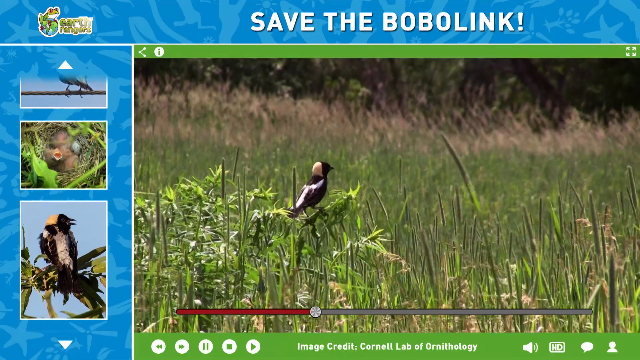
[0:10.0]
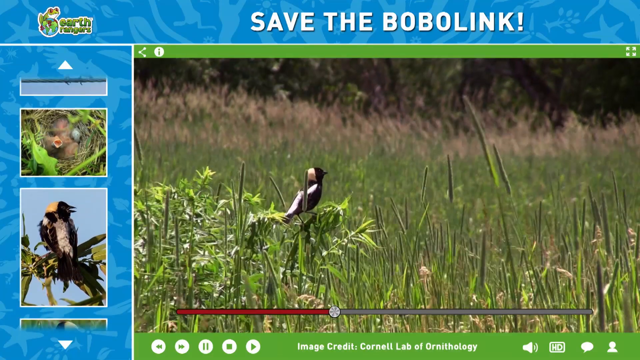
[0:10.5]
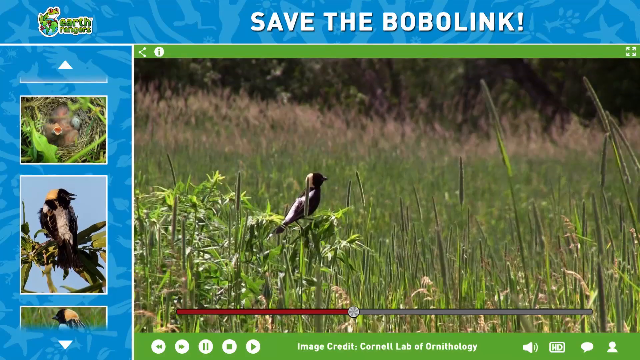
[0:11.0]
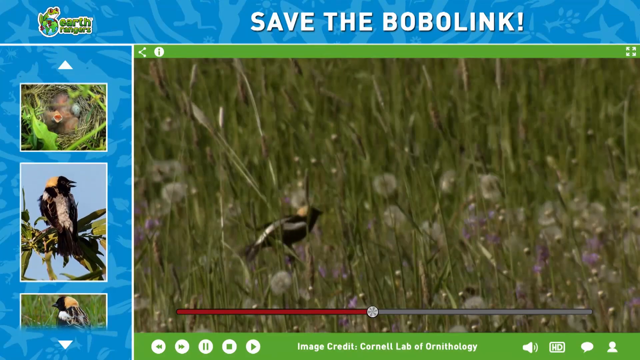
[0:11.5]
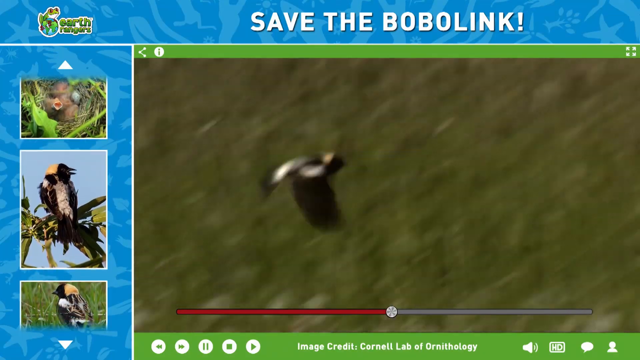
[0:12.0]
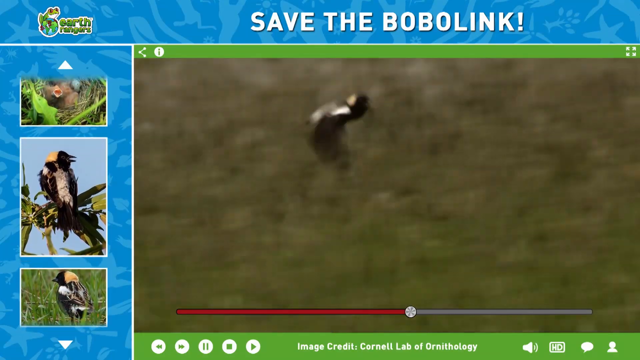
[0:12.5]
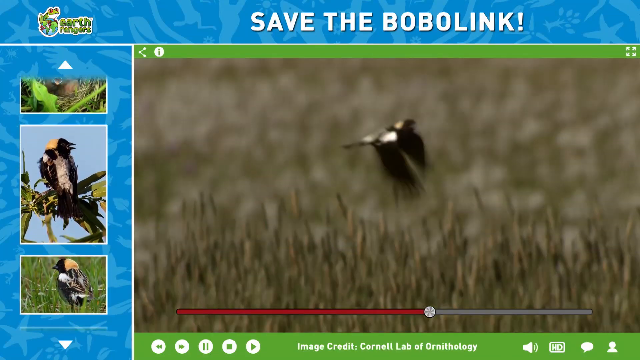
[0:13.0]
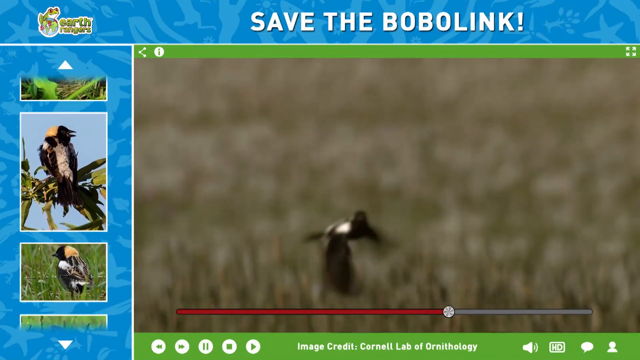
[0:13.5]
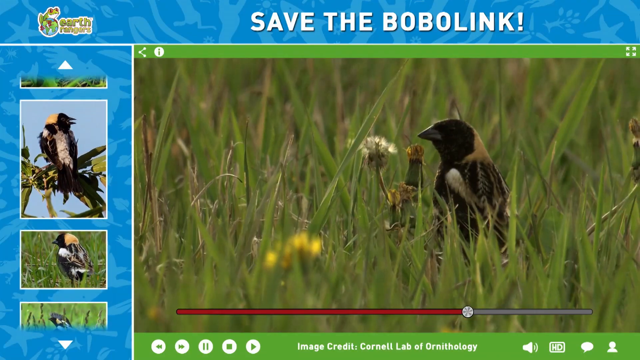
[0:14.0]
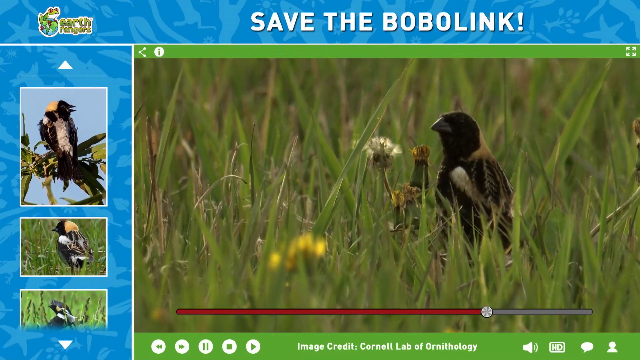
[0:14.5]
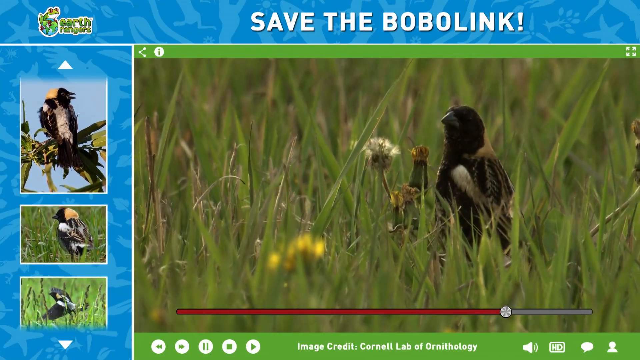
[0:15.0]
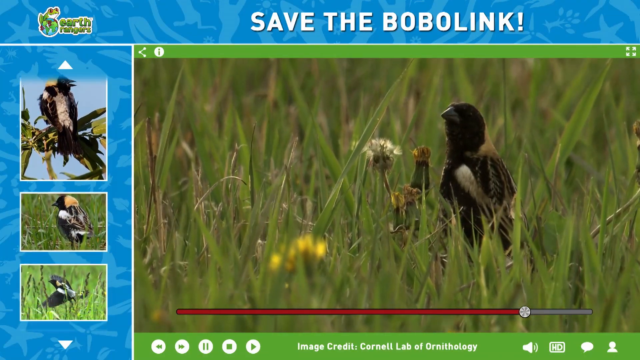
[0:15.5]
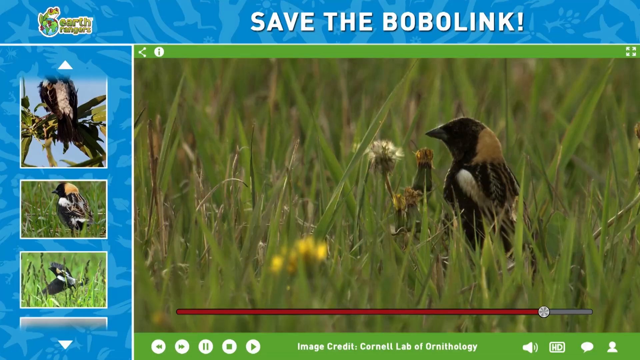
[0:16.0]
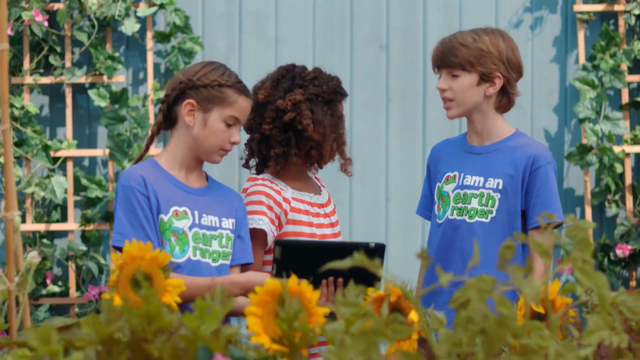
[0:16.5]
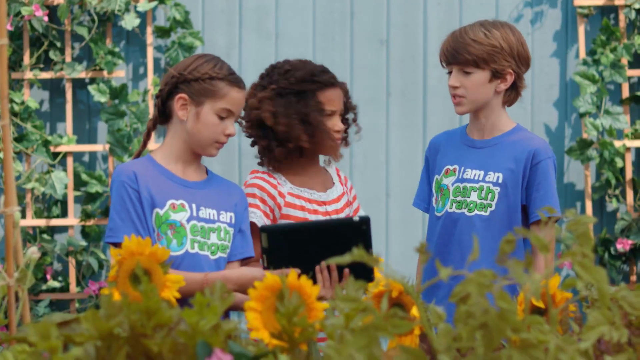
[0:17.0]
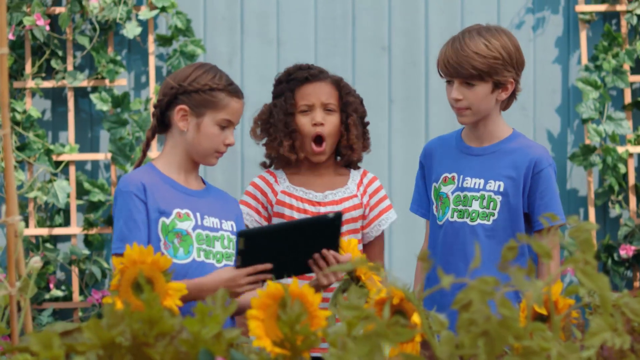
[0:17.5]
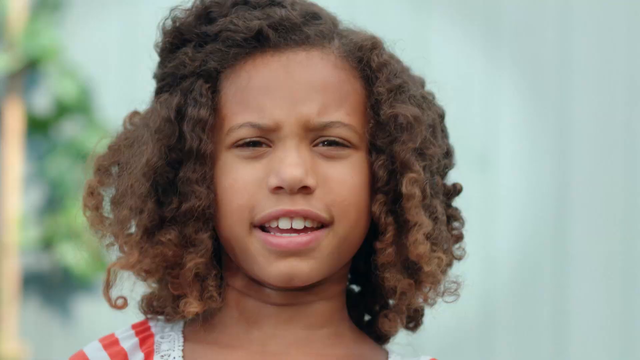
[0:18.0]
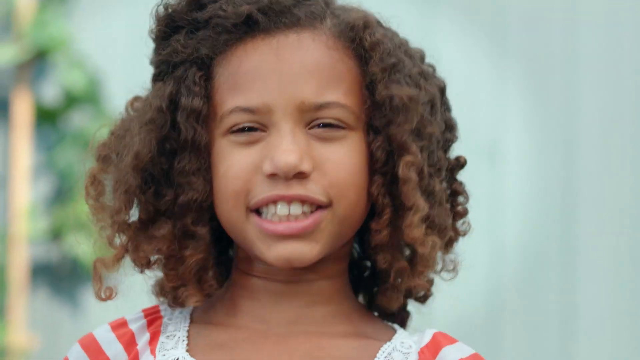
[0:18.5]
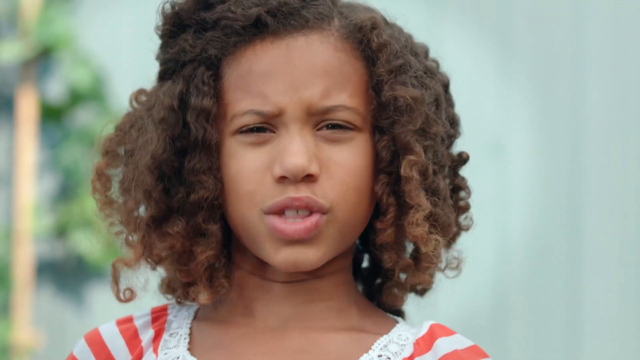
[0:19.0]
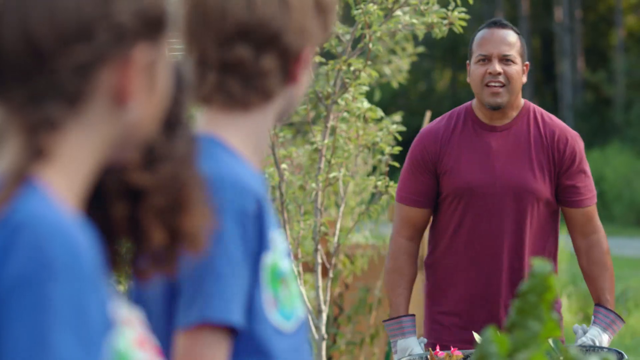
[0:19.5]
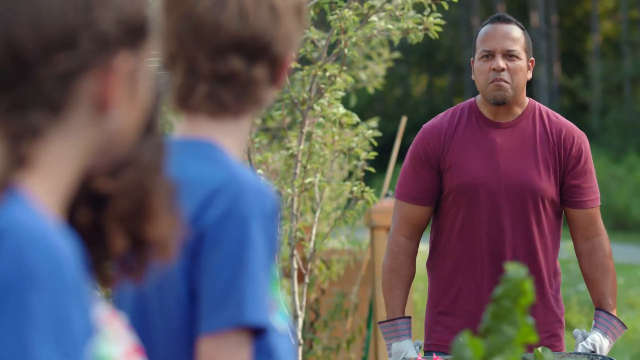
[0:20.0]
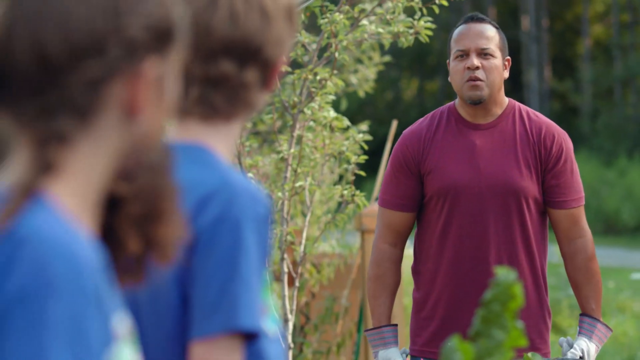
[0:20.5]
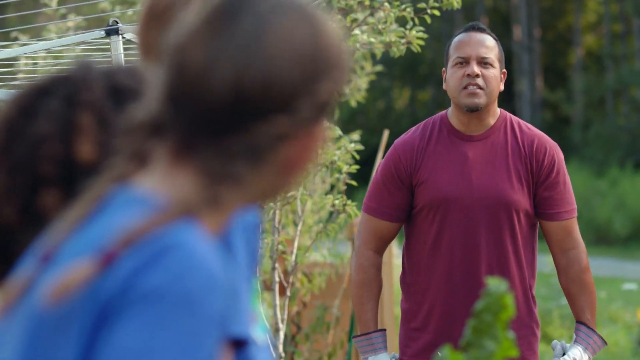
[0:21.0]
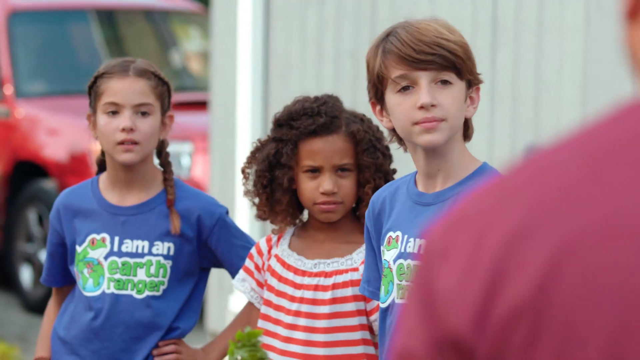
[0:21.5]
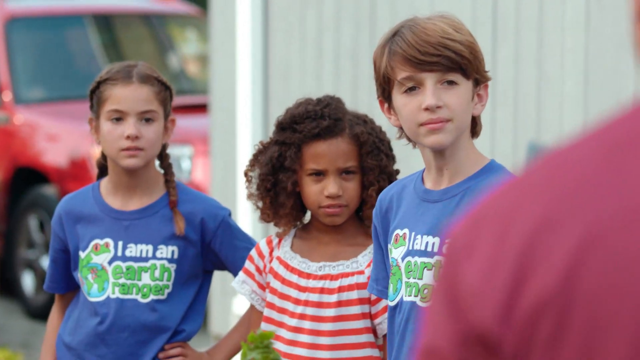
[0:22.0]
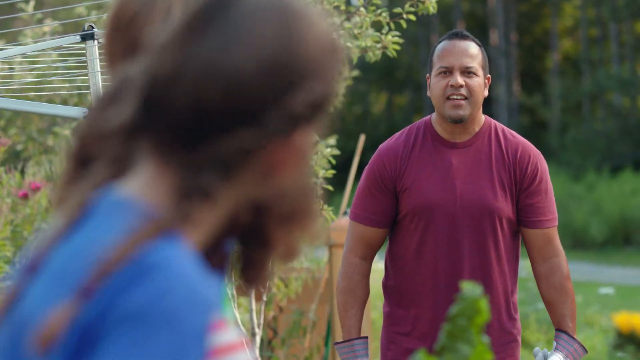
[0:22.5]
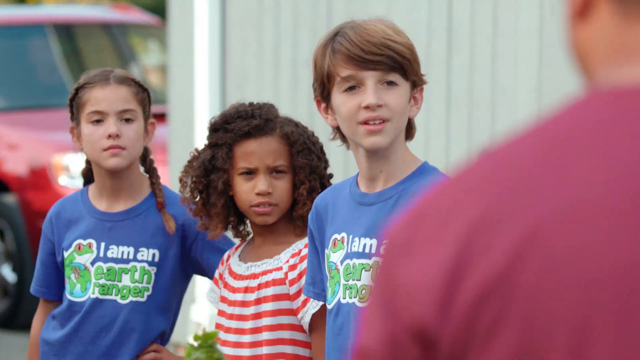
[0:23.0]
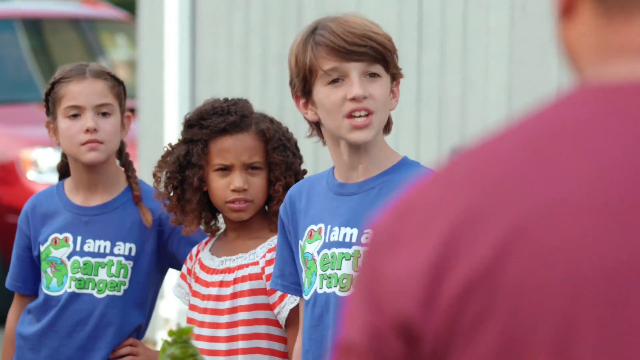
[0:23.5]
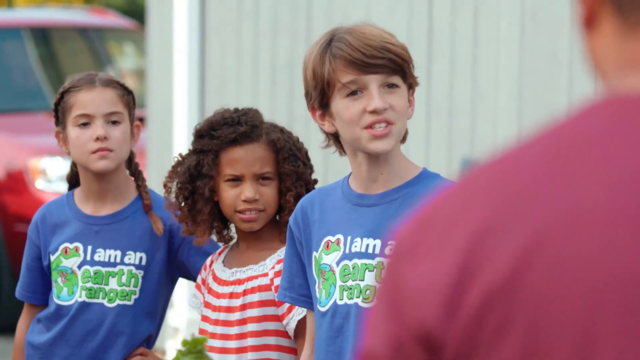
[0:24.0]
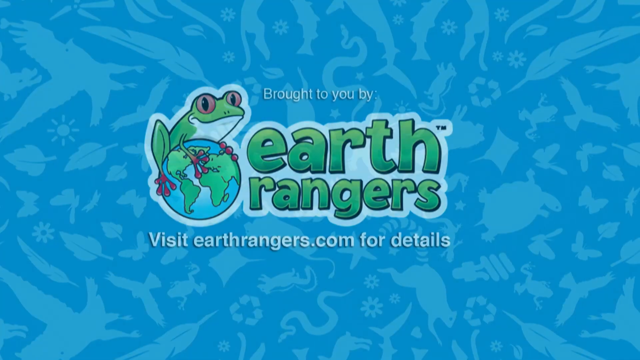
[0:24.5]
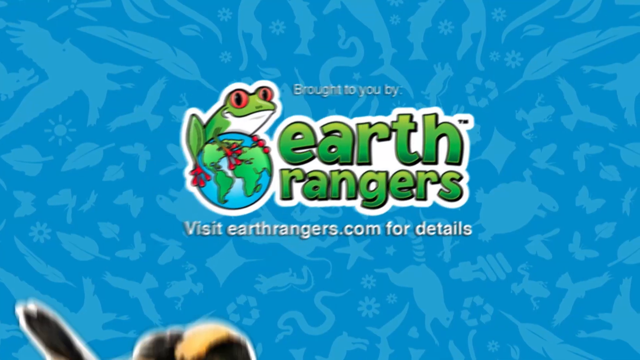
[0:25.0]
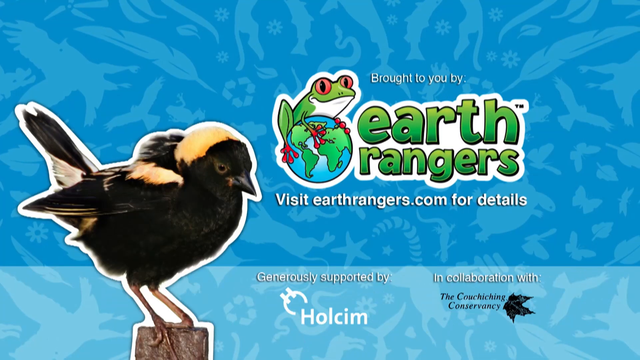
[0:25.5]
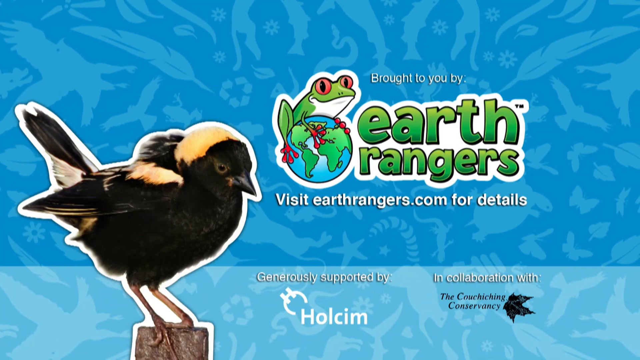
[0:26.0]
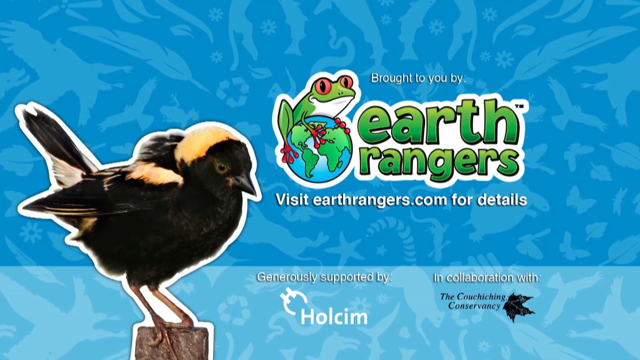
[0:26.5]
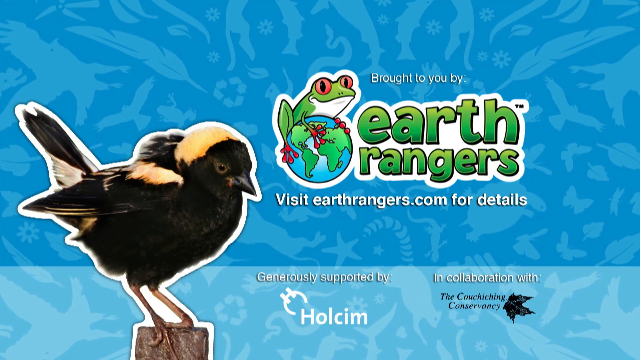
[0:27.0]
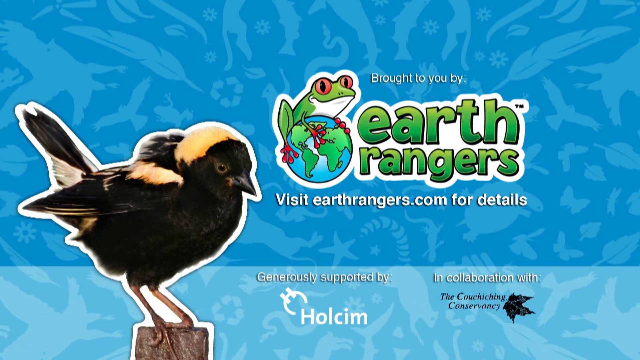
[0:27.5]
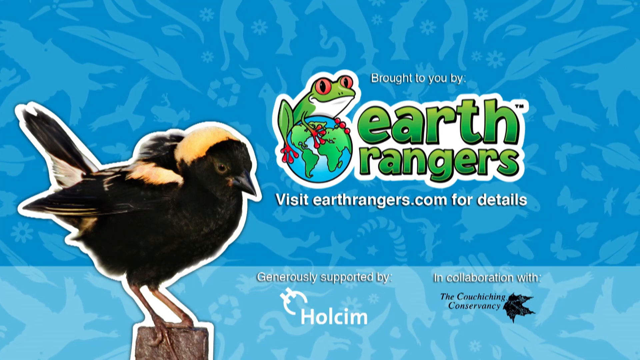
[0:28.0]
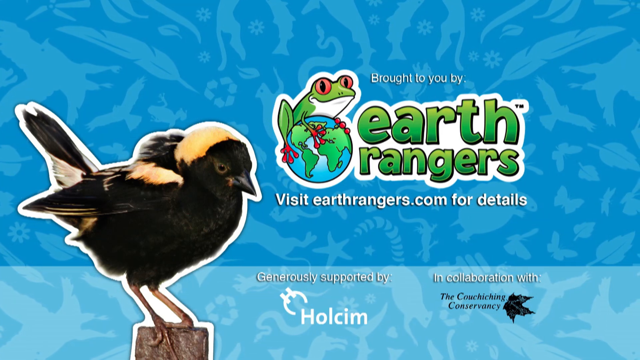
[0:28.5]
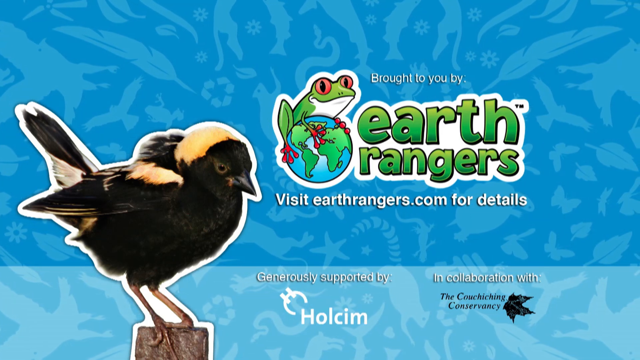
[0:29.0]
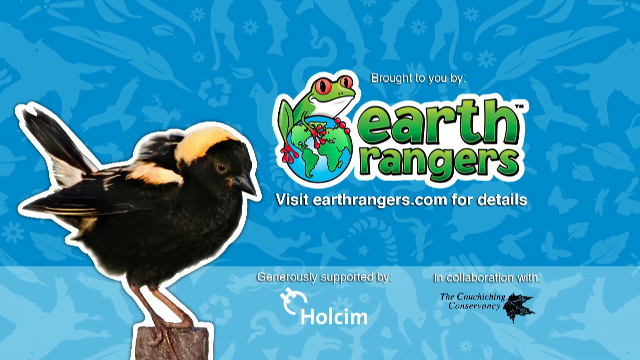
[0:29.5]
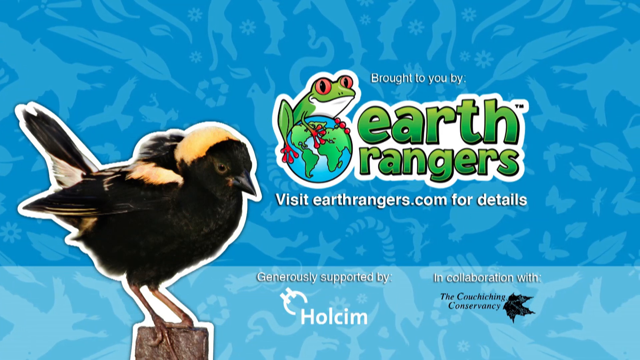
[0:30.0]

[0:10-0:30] The Save the Boba Link bird is shown looking around; it is black with white stripes and has a yellow back of its head. It seems to be viewed through the iPad, since a video is playing with a slider at the bottom moving across. The video cuts back to the kids: the boy says something, then the girl says something, and then the adult apparently starts saying something to the kids. The video cuts back and forth between the adult and the kids, and the boy says something. At the very end, text pops up reading "Brought to you by Earth Rangers. Visit earthrangers.com for details."